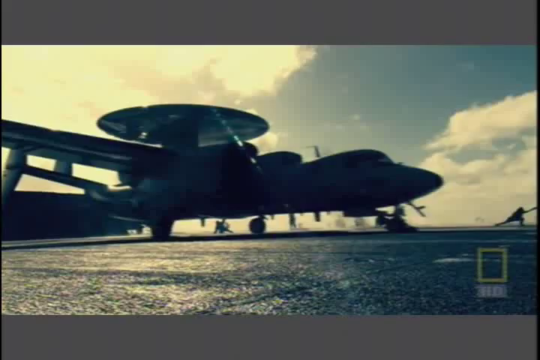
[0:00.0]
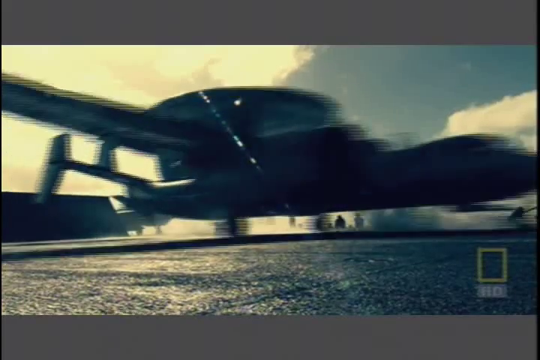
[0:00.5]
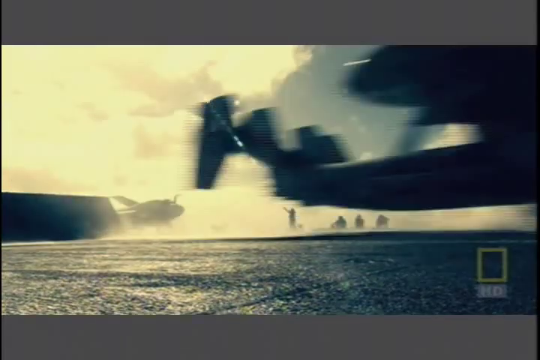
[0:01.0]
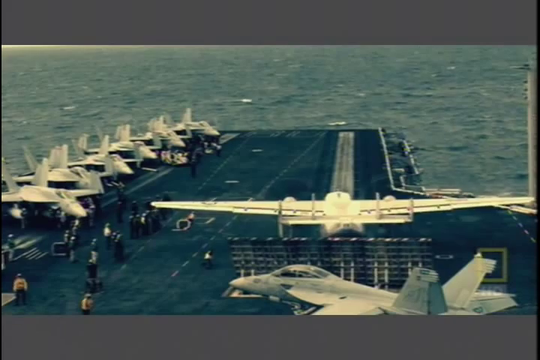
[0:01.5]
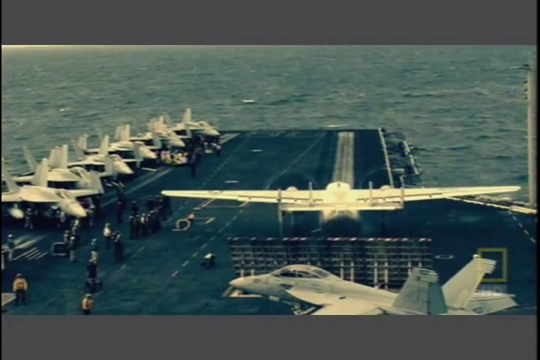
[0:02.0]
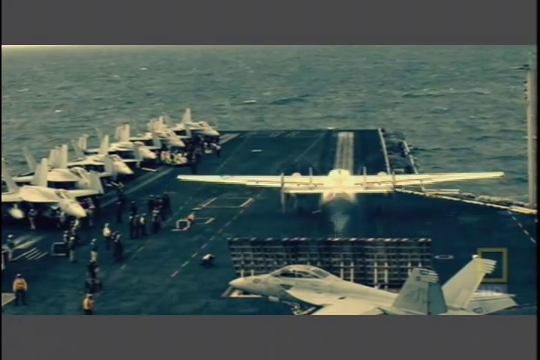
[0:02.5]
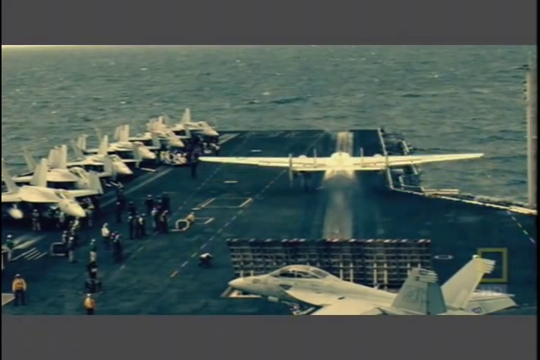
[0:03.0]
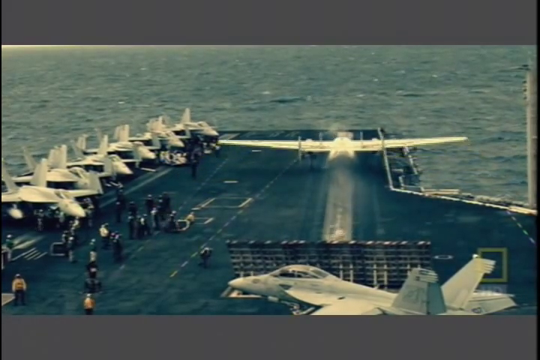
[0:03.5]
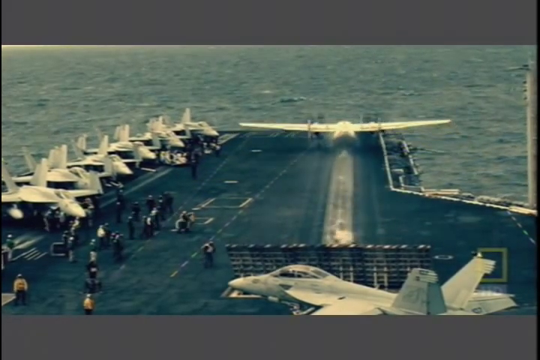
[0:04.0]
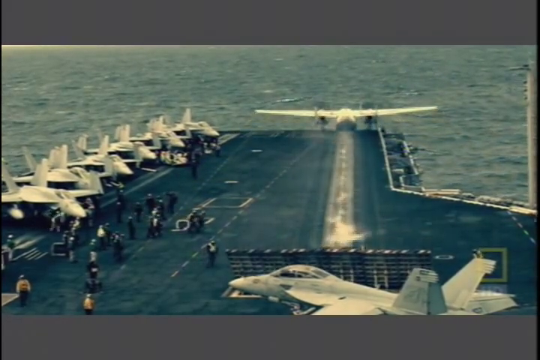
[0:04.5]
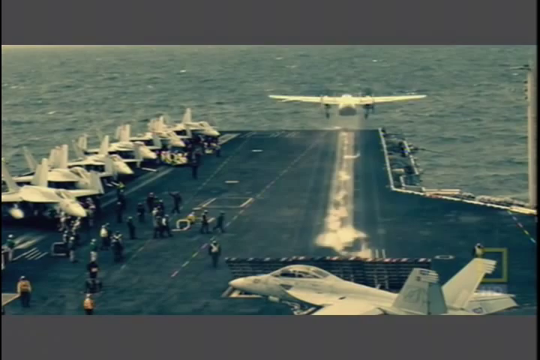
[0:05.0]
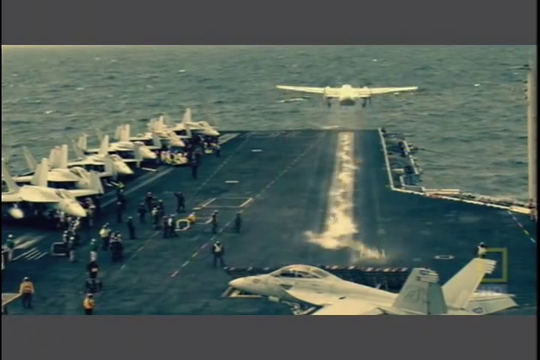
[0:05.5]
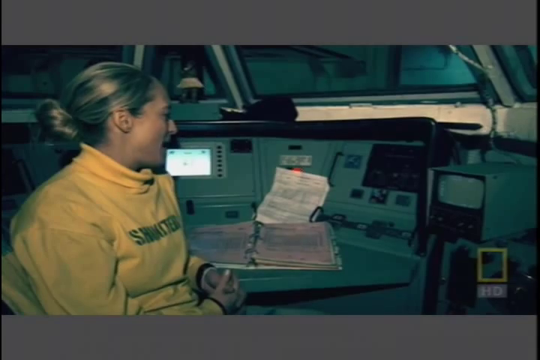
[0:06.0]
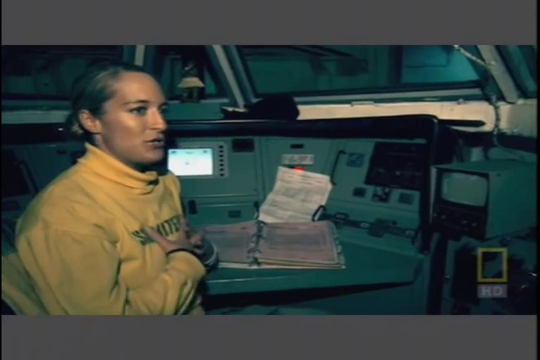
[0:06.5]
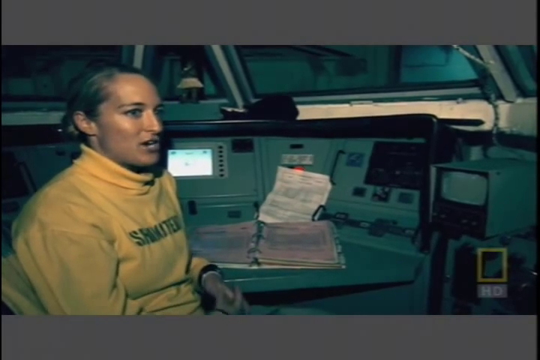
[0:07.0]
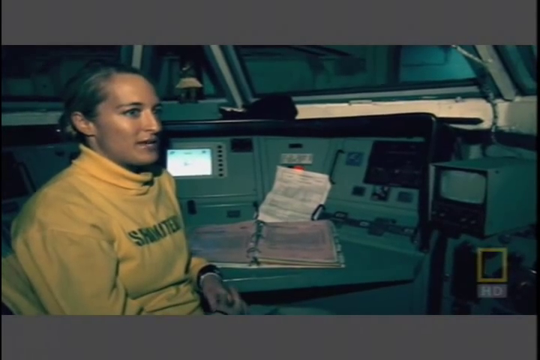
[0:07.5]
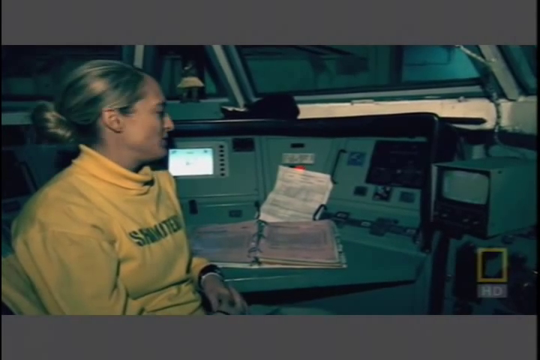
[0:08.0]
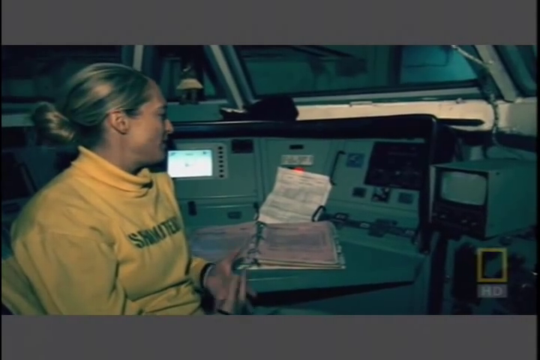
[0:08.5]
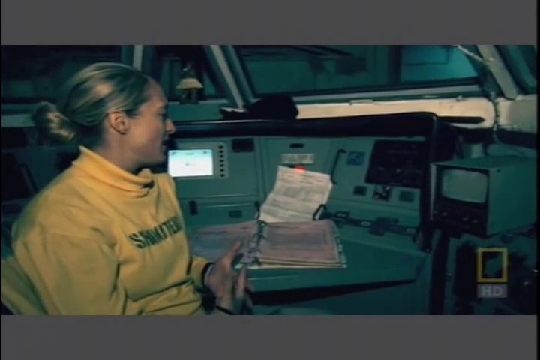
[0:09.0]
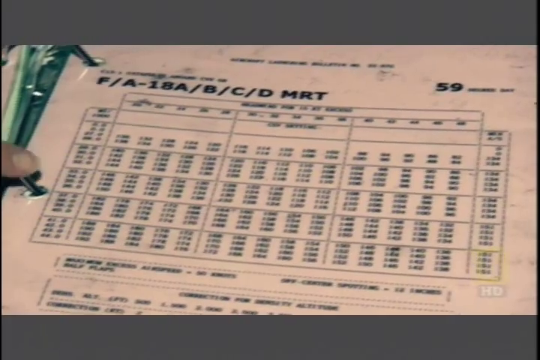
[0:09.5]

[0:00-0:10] A close-up side view shows an airplane taking off from an aircraft carrier, seen in silhouette because the video is not very colorful. On the right side of the frame is the silhouette of the traffic controller, leaning with his leg bent sideways and his hand stretched out toward the right side of the frame. The airplane, which has what looks like a horizontal circular disk on top of it, takes off, and as it does, the silhouettes of three men appear in the distance behind the plume of smoke or exhaust coming from it. Next, the airplane is seen from the rear; its wingspan is quite large. On the left side of the carrier vessel, several planes are parked, about six fighter jets, with men standing alongside them, and one fighter jet is parked sideways on the right side of the frame. The jet takes off. Next, a lady in a turtleneck sweater speaks inside a compartment that looks like one of the compartments of the aircraft carrier; as she speaks, she points to an open chart in front of her on her desk.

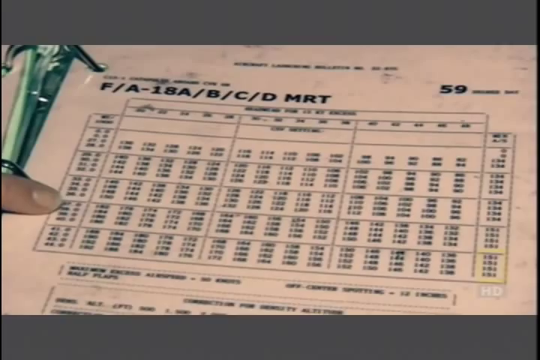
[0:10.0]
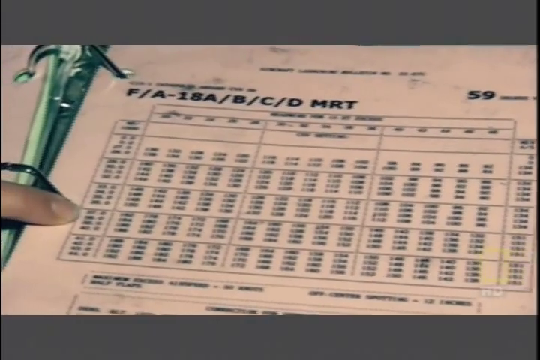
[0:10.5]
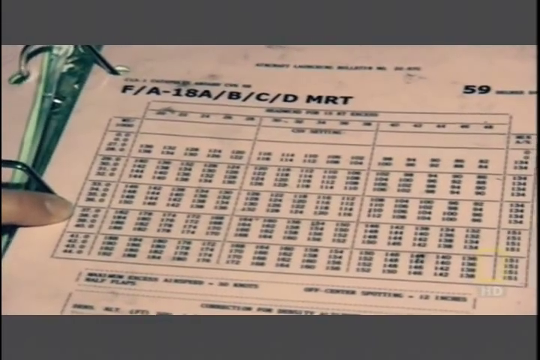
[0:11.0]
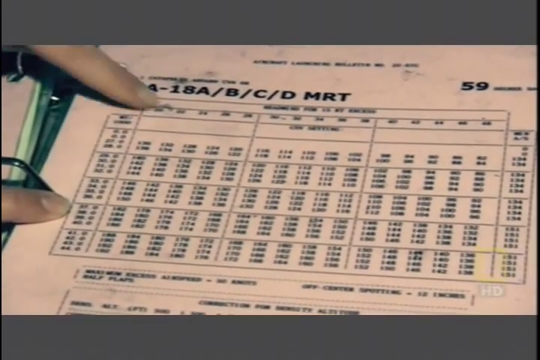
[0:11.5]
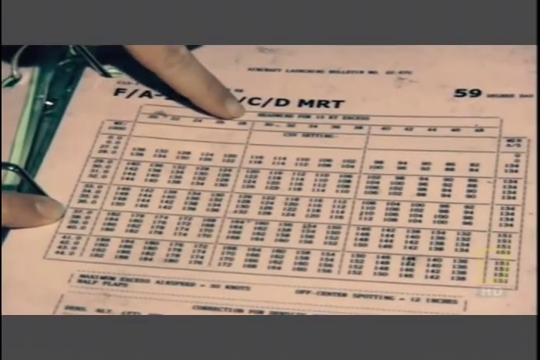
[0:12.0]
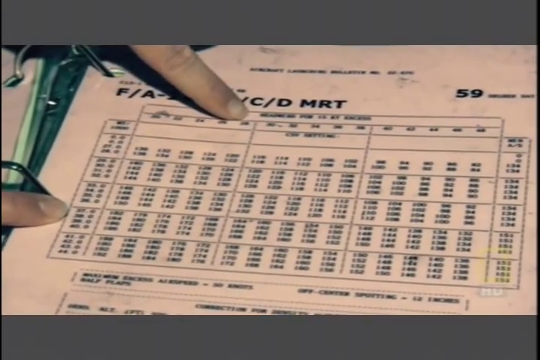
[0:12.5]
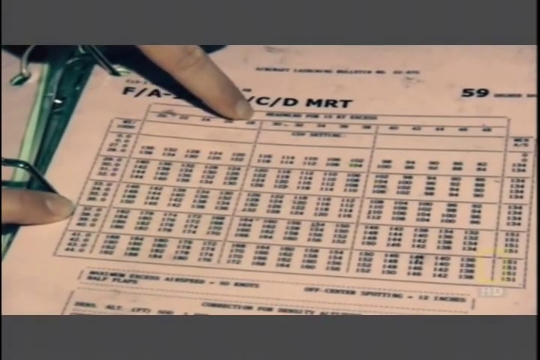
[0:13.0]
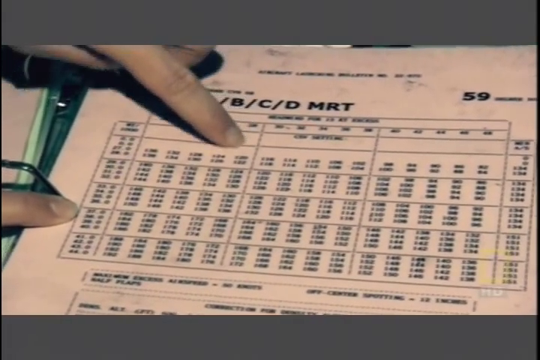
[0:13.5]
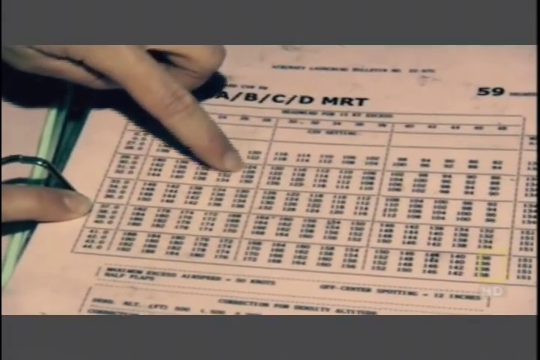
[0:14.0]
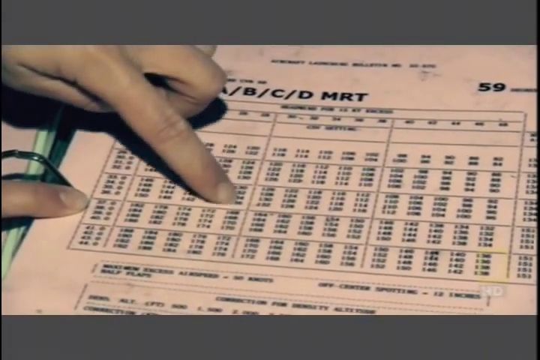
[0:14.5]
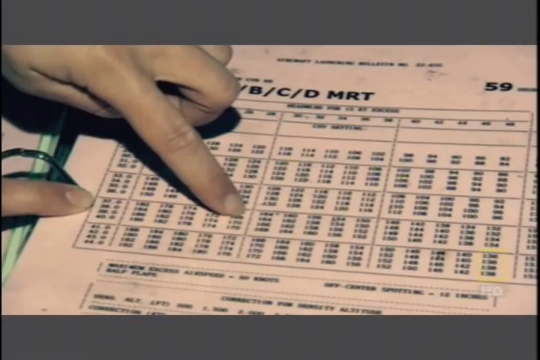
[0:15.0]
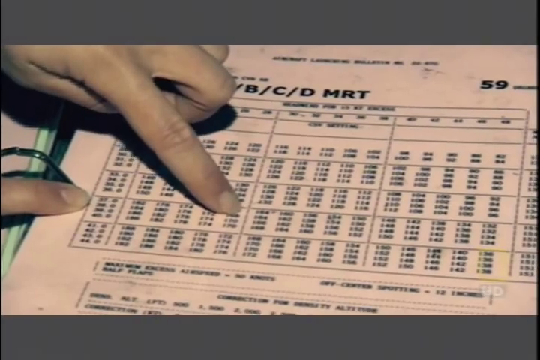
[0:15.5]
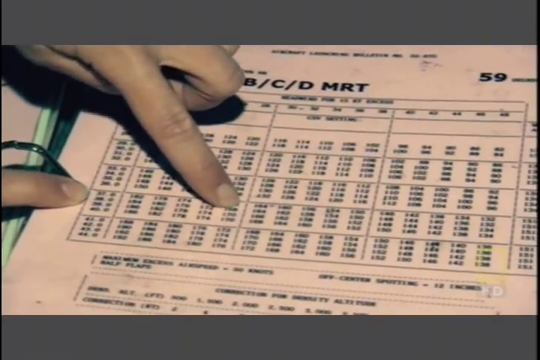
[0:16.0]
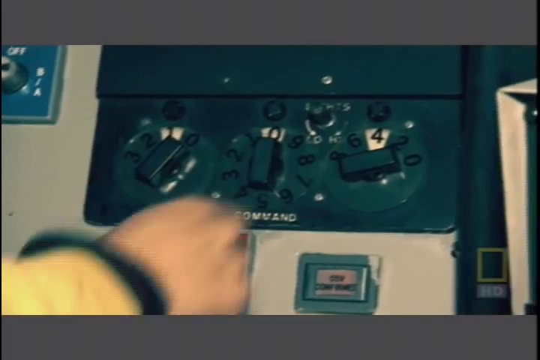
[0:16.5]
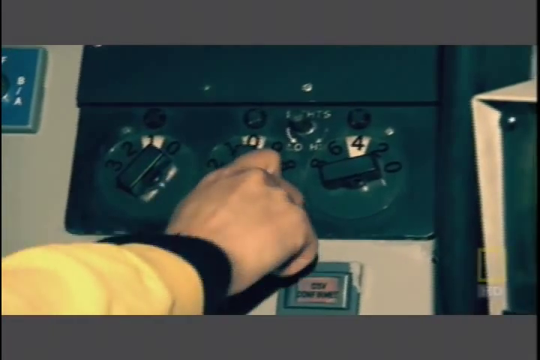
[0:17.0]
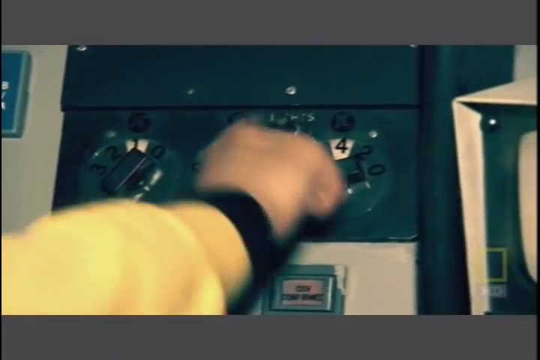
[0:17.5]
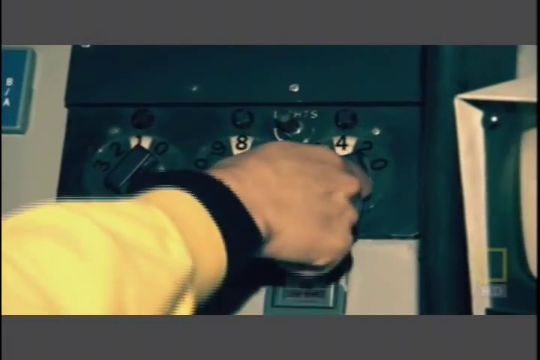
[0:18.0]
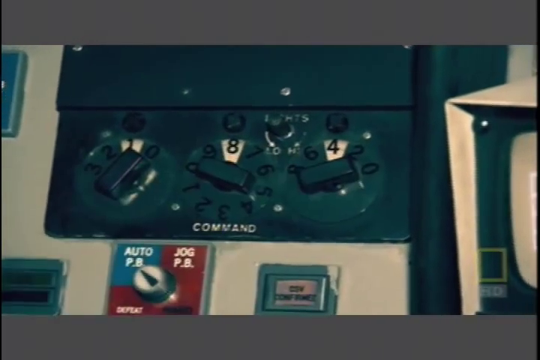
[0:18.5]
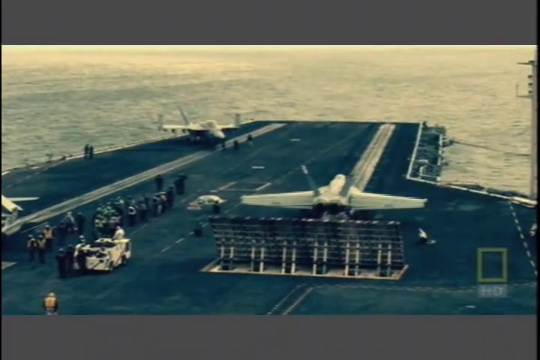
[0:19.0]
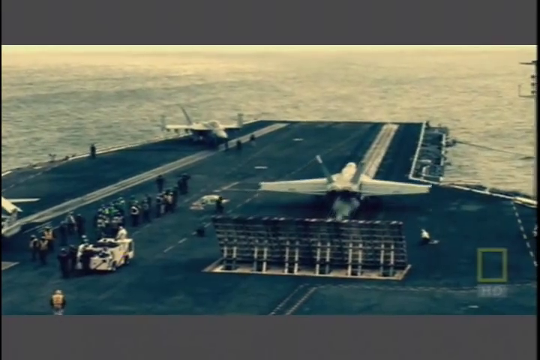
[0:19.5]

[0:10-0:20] A close-up shows a chart with five columns and five rows; the first and fifth columns are quite narrow, while the second, third and fourth are large. There are rows and rows of numbers on it. A well-manicured finger touches the chart, and another finger emerges to touch and run down one of the columns. Next, a hand turns a knob; the number 8 is displayed above the middle knob and the number 4 above the knob on the right. An aircraft then takes off from the right side of the aircraft carrier's deck.